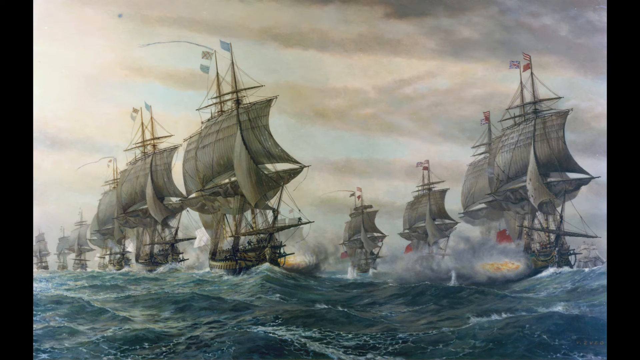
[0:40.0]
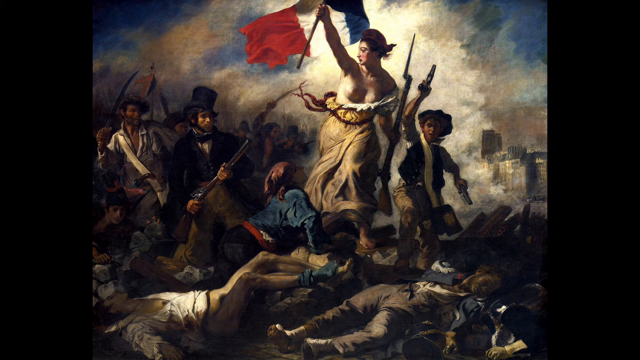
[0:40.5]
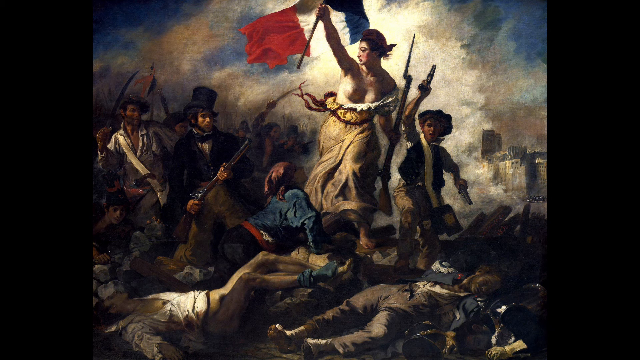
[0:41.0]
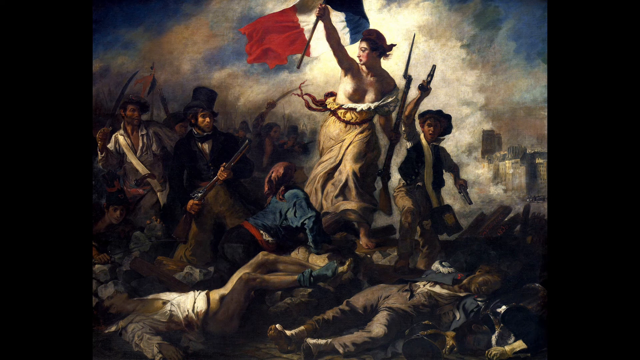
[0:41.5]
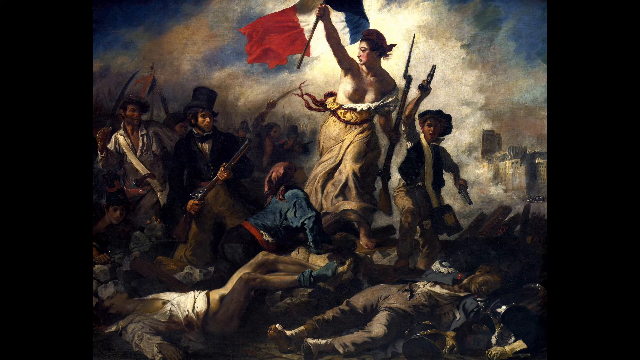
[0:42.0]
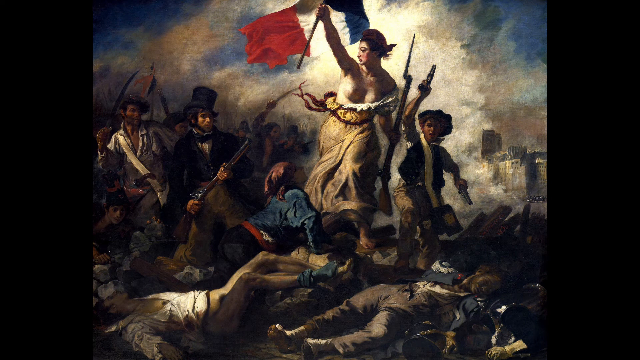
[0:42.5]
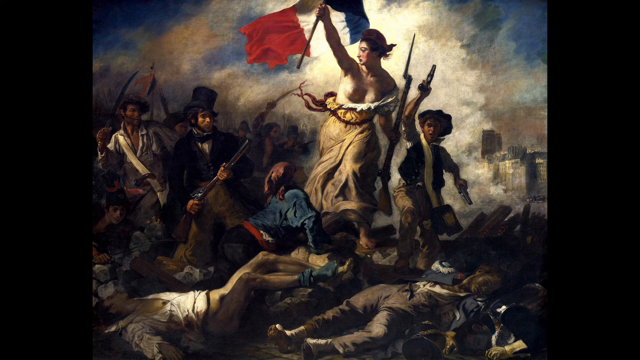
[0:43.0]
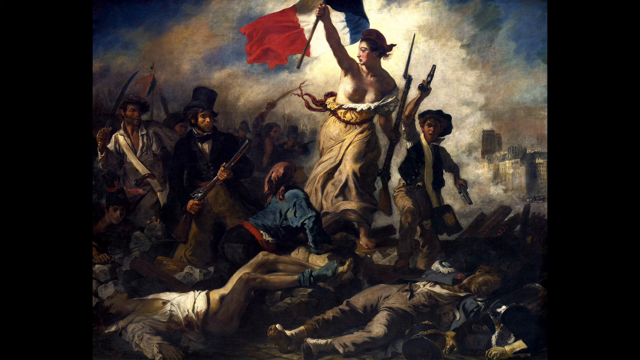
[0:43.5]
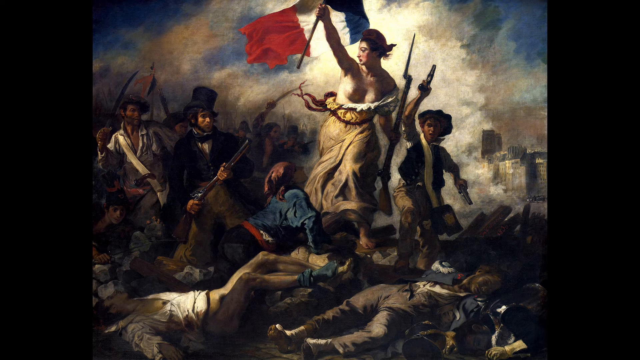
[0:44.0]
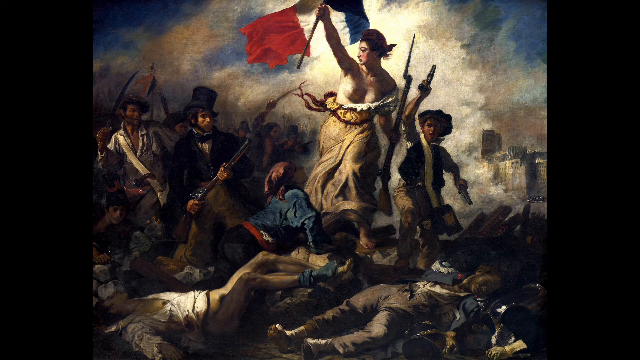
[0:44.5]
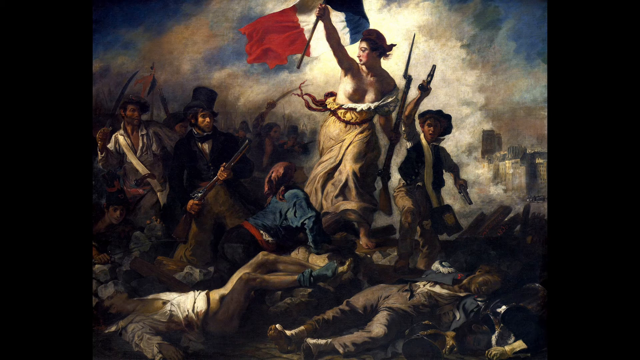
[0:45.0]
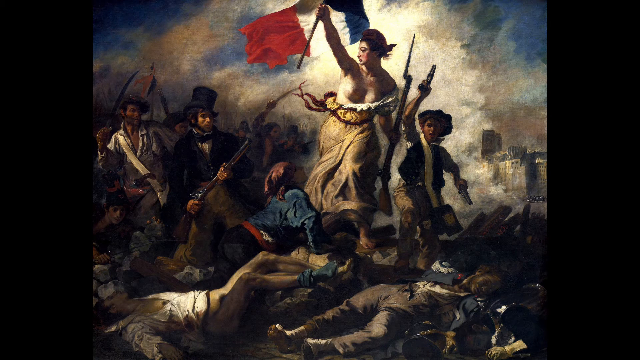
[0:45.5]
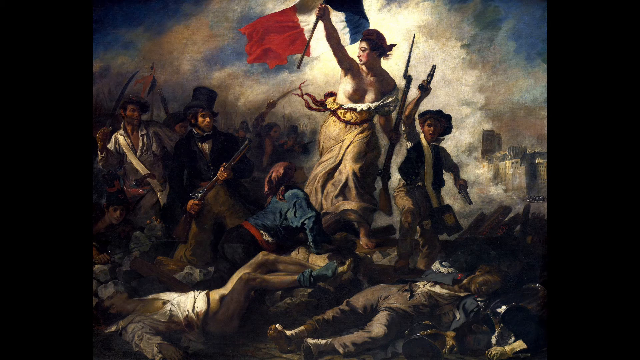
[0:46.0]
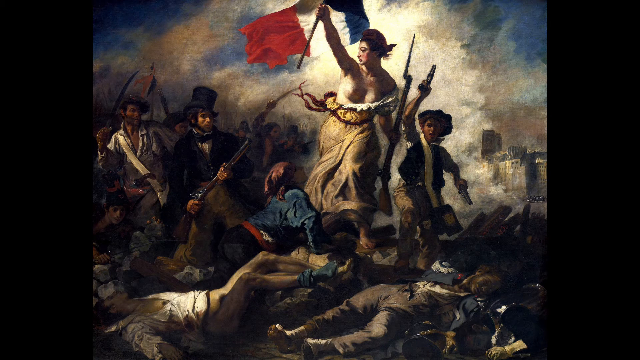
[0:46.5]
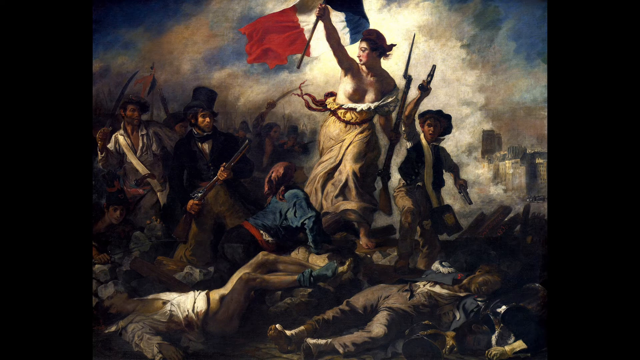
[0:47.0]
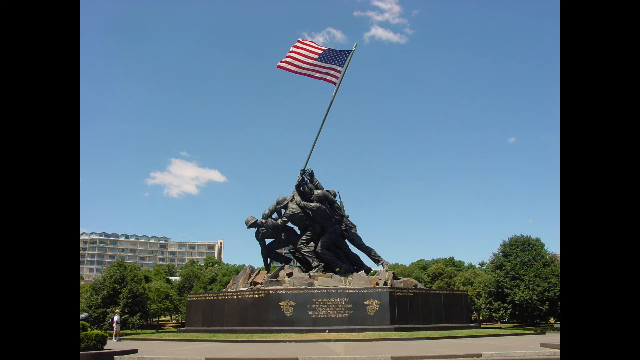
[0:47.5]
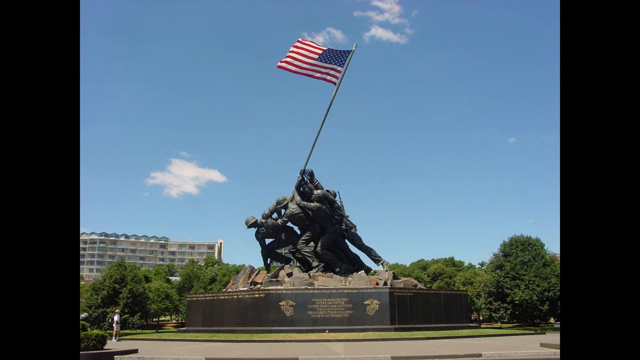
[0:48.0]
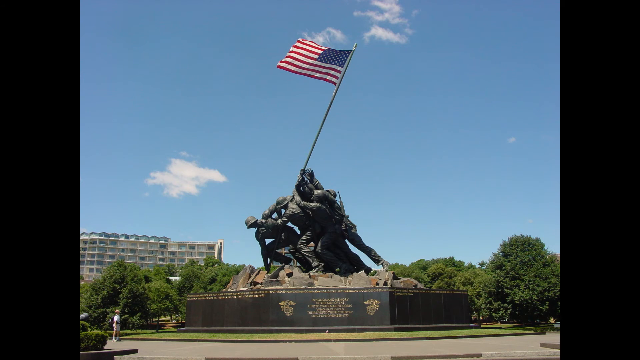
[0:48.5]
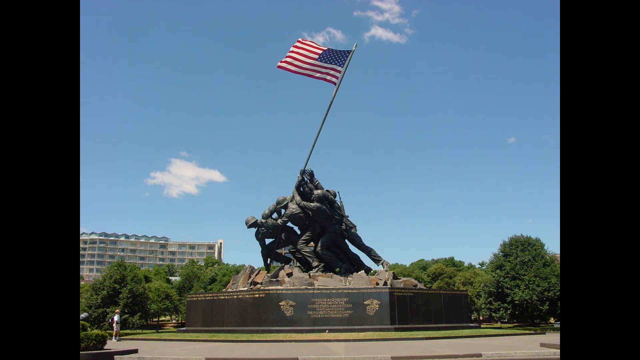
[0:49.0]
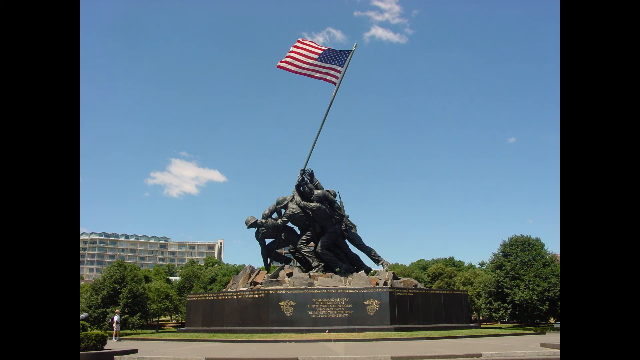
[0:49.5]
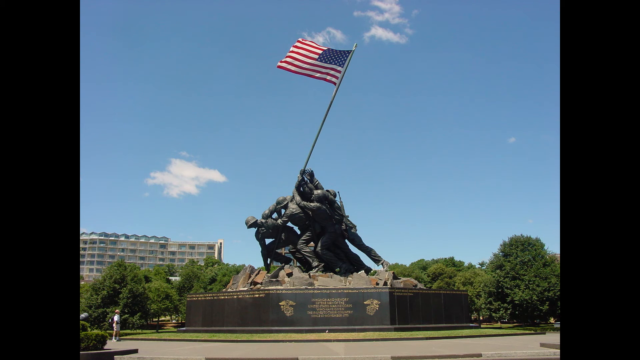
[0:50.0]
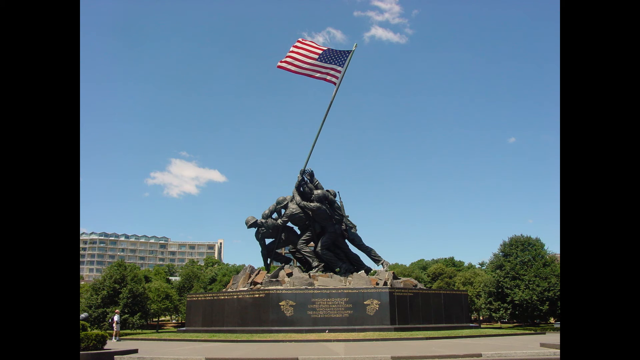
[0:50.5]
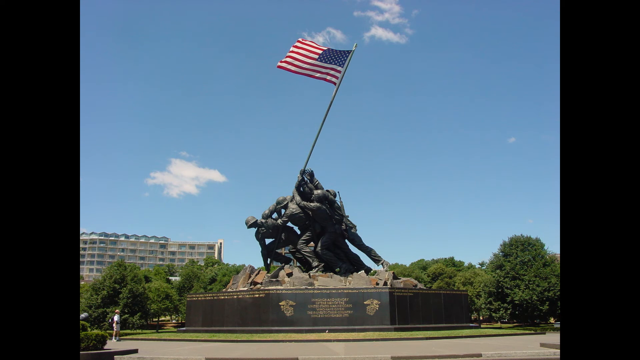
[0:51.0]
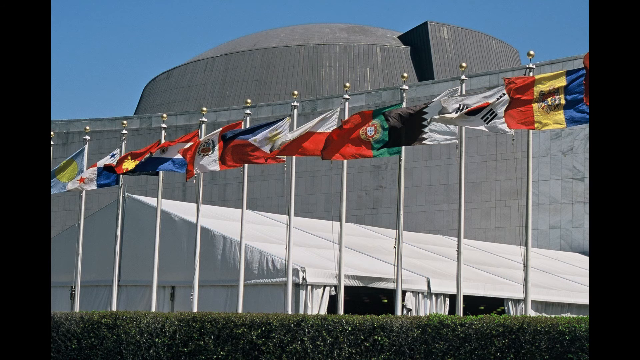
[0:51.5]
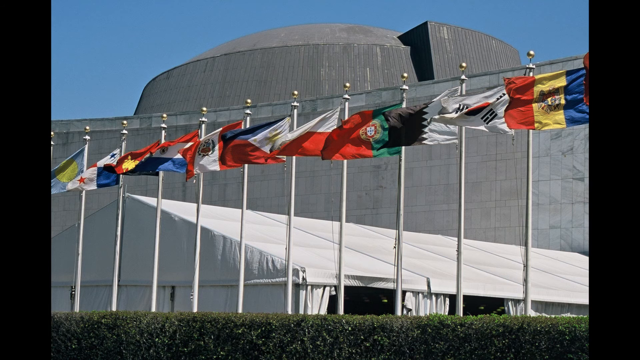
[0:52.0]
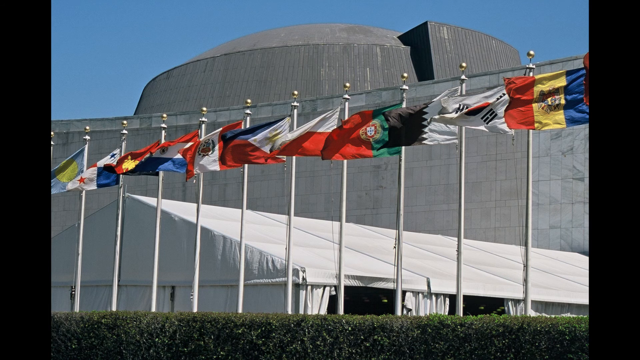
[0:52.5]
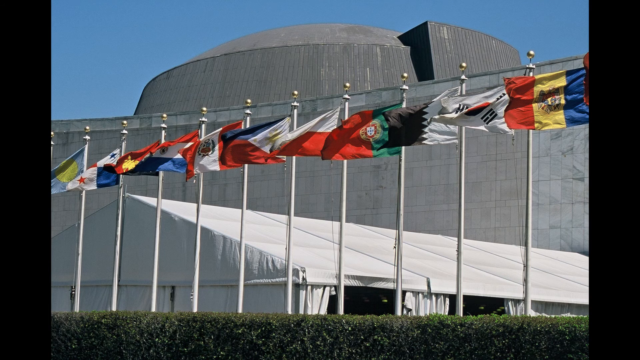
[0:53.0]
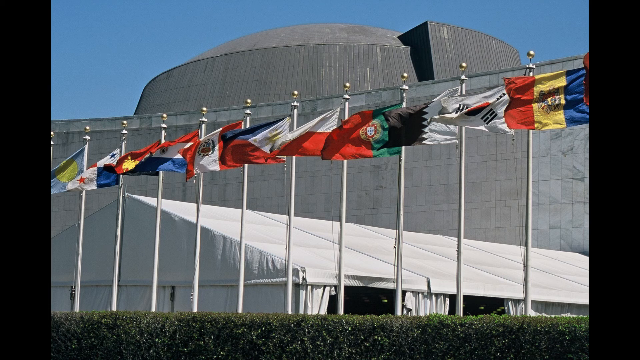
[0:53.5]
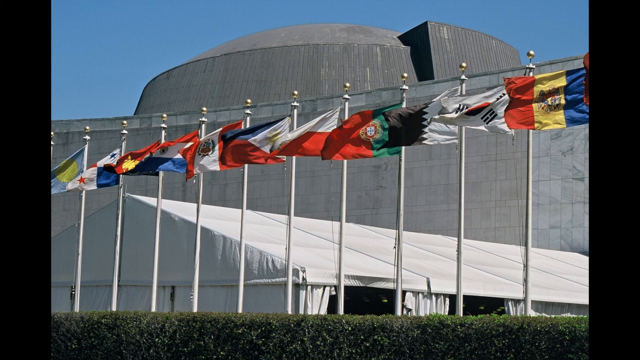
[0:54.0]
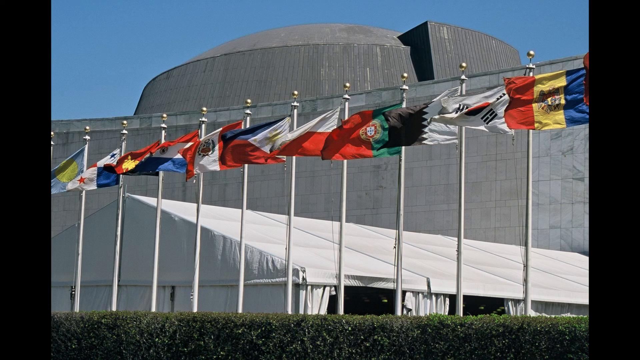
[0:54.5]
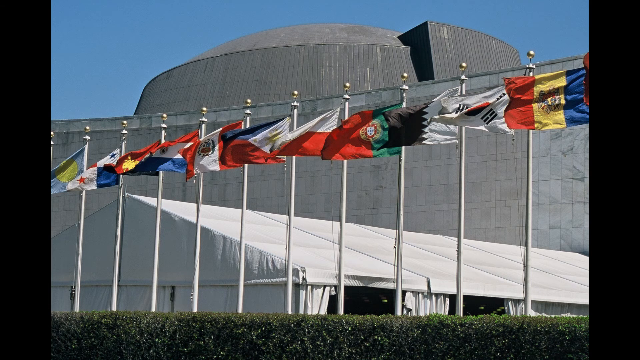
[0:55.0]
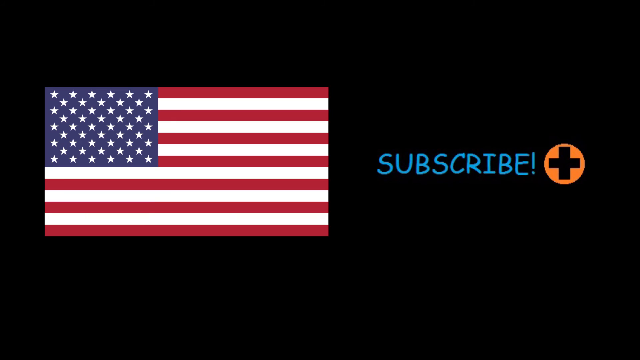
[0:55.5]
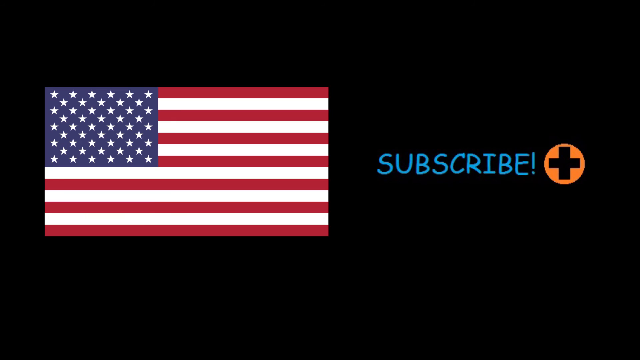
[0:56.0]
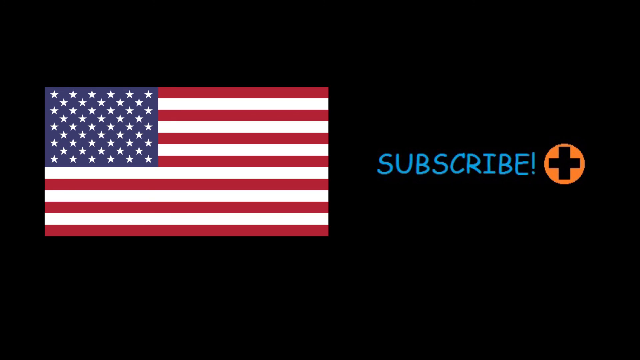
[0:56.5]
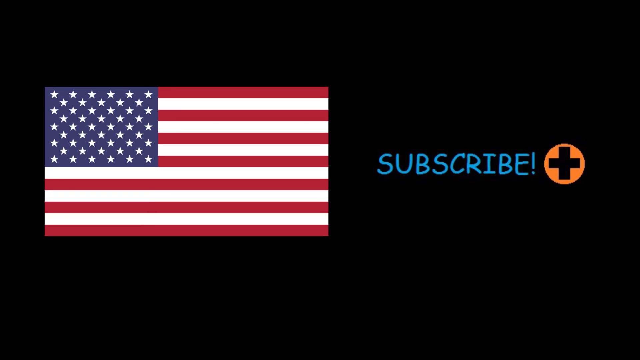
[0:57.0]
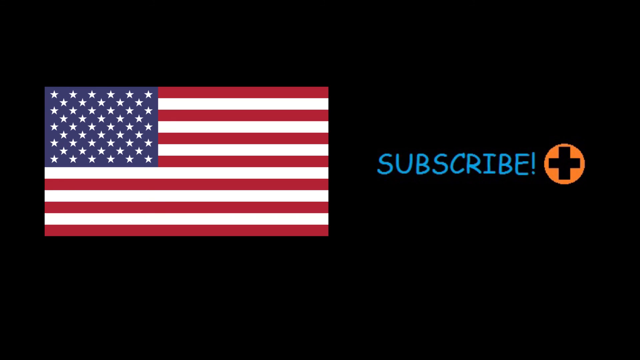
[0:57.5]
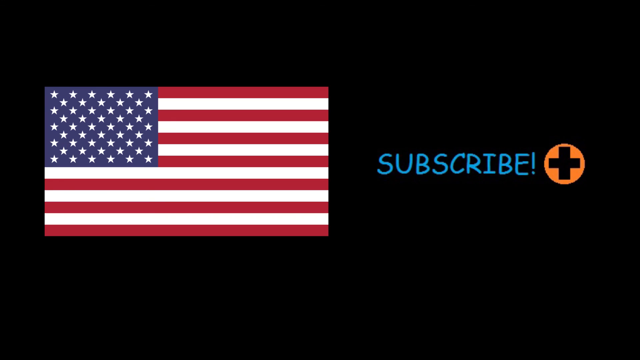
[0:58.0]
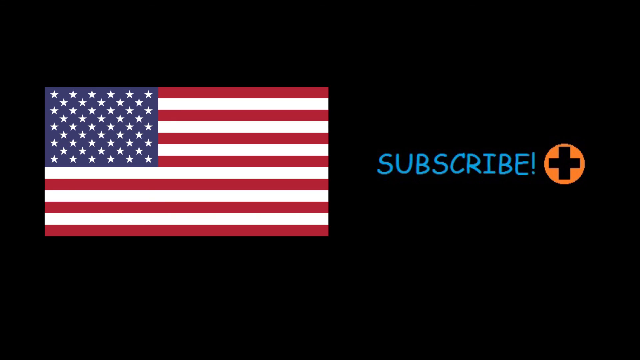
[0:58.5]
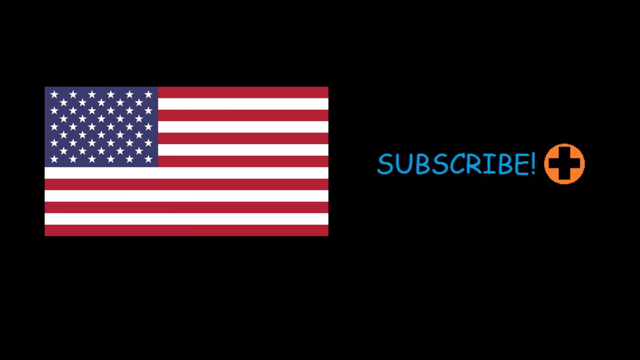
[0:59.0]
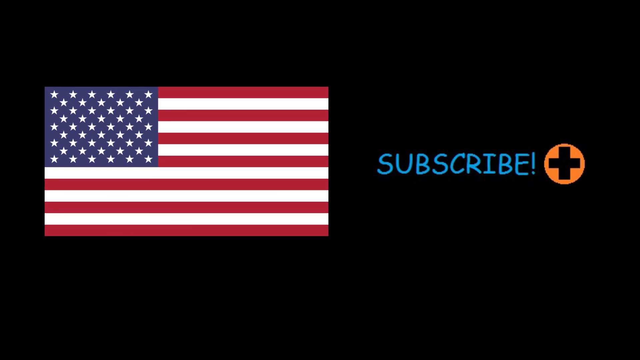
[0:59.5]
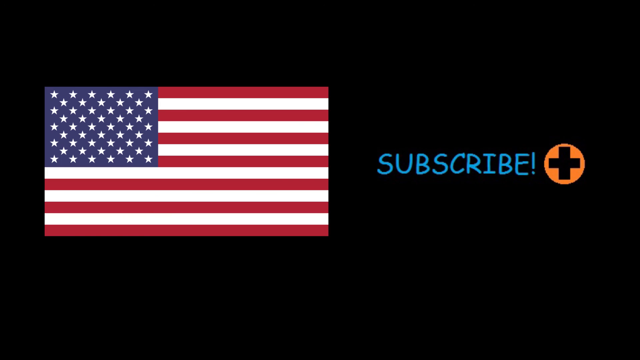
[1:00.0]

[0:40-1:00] A painting of a naval battle shows a couple of rows of ships with large billowing sails and flags on top, possibly country flags, shooting cannons at each other; the nearest ships show fire and smoke on their sides. Next is a painting possibly from the French Revolution. A woman stands holding the French flag over her head, with smoke in the background and bodies piled underneath her. A young boy behind her holds a pistol in each hand, one arm upraised and the other pointed downward. On the left, a man in a top hat, black bow tie and vest holds a rifle. Other people are in the back but hard to see, with a crowd in the back surrounding the woman. There are buildings on the right side behind her, and dead bodies are visible. Then a photograph shows a memorial statue, possibly from the Vietnam War or maybe the Revolutionary War, depicting several American soldiers holding an American flag upright on a large pole, with the flag at the top and a bright blue sky with white fluffy clouds behind. Finally, a shot shows several flags in front of a building, possibly the United Nations, though it is not clear.